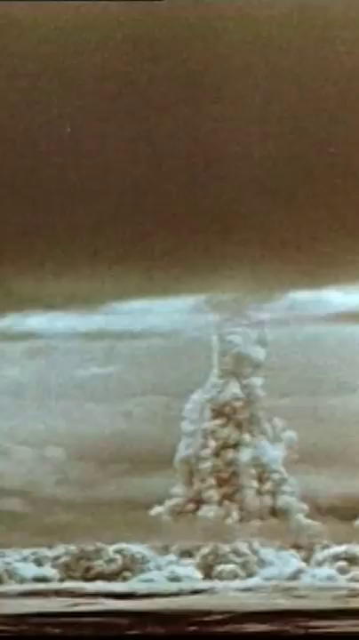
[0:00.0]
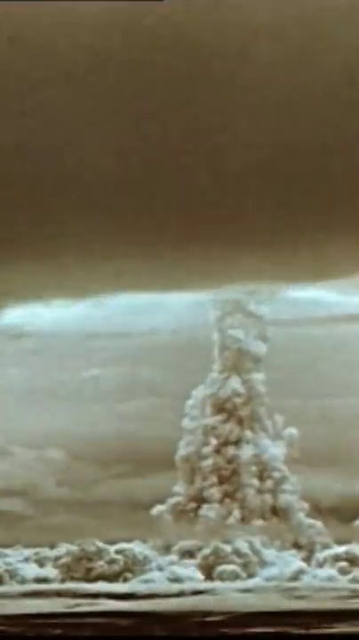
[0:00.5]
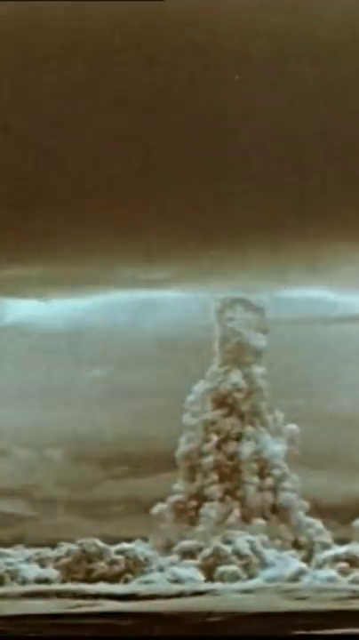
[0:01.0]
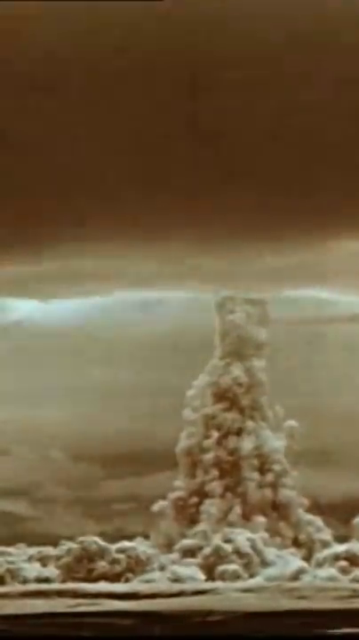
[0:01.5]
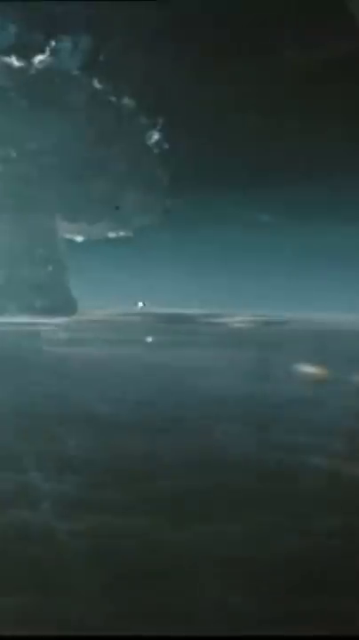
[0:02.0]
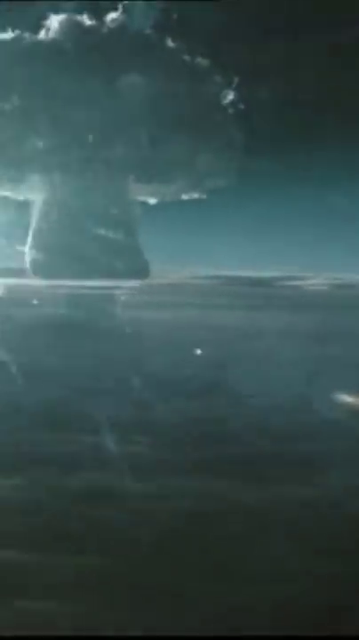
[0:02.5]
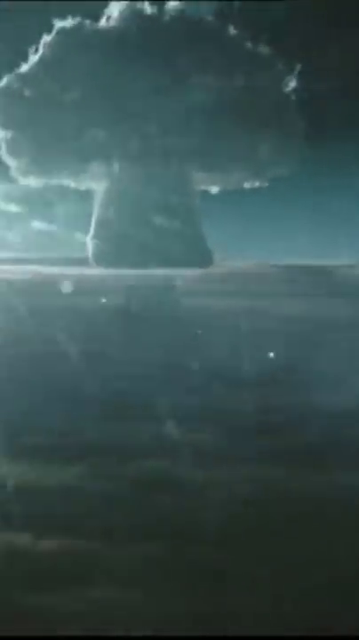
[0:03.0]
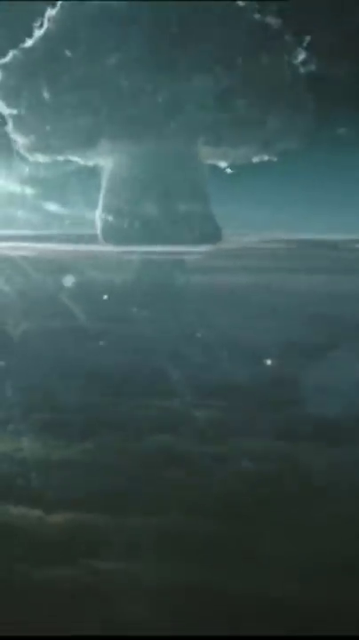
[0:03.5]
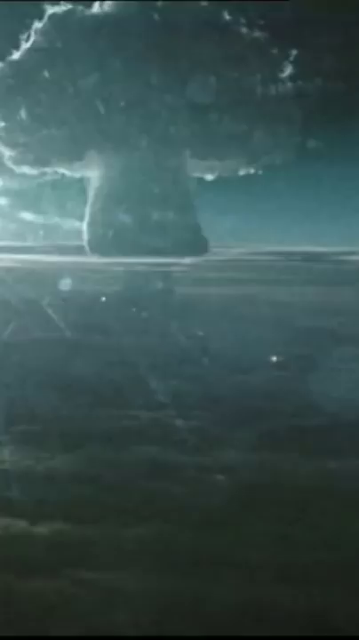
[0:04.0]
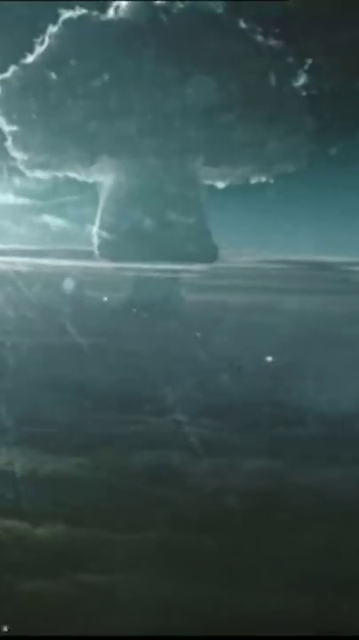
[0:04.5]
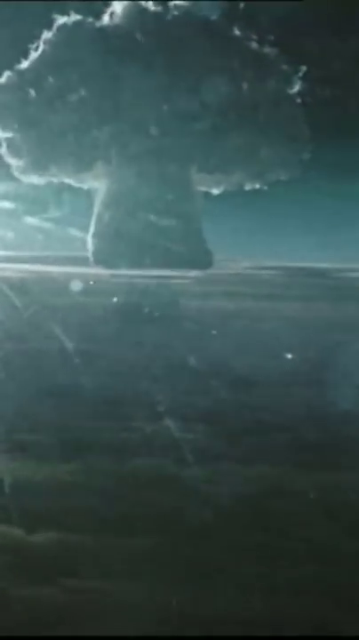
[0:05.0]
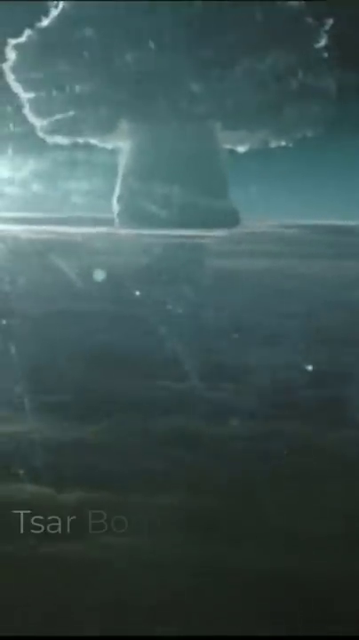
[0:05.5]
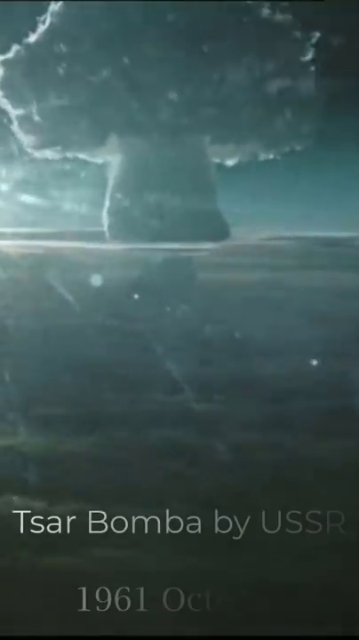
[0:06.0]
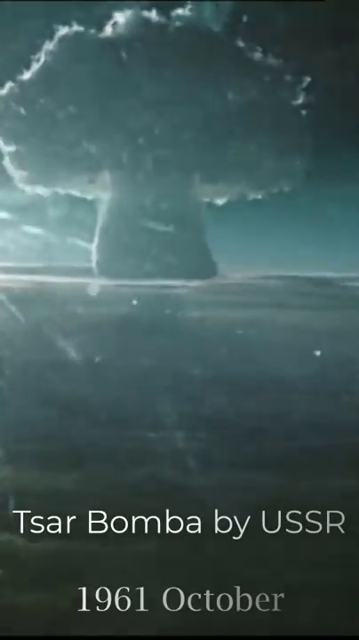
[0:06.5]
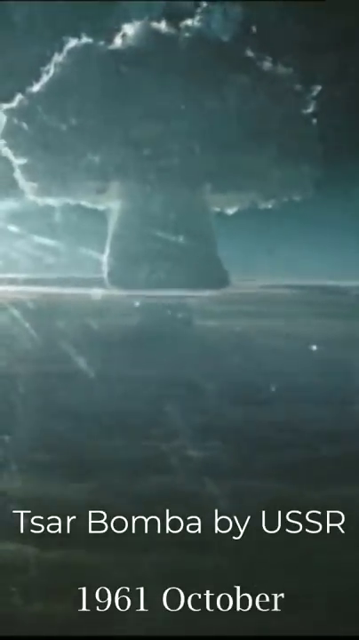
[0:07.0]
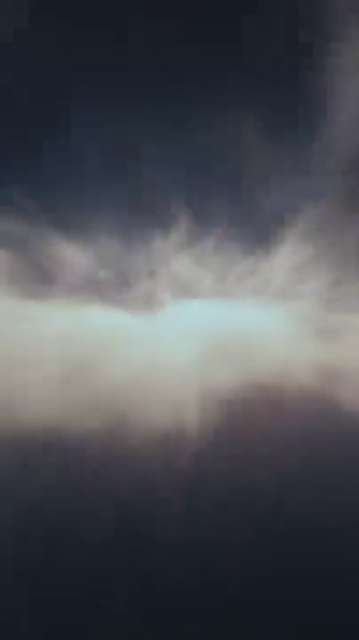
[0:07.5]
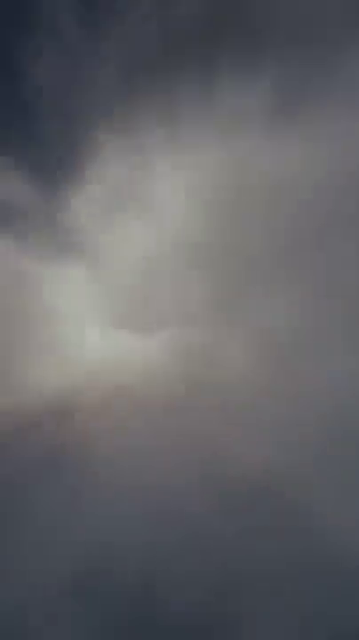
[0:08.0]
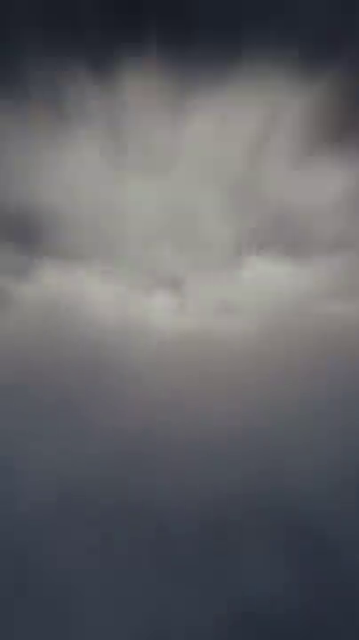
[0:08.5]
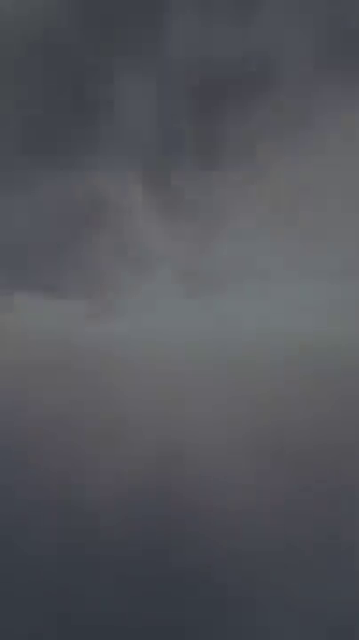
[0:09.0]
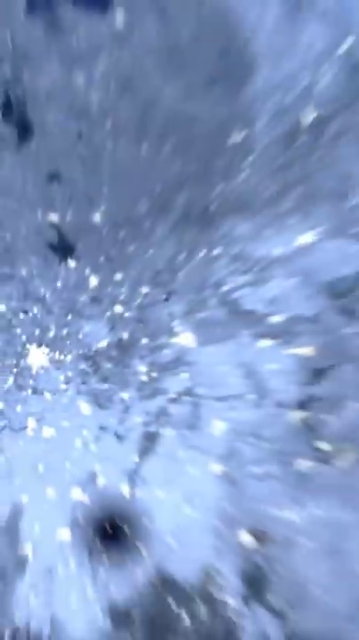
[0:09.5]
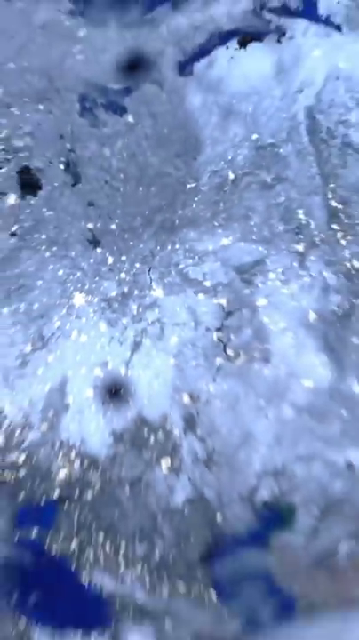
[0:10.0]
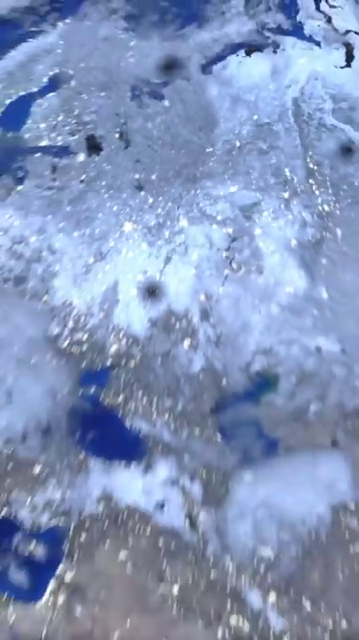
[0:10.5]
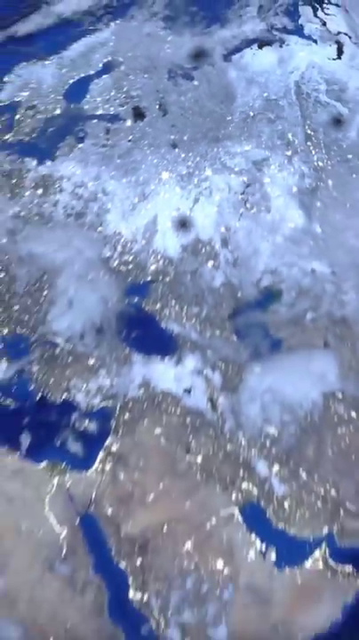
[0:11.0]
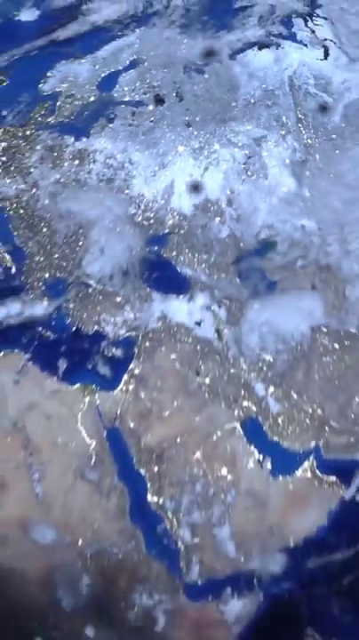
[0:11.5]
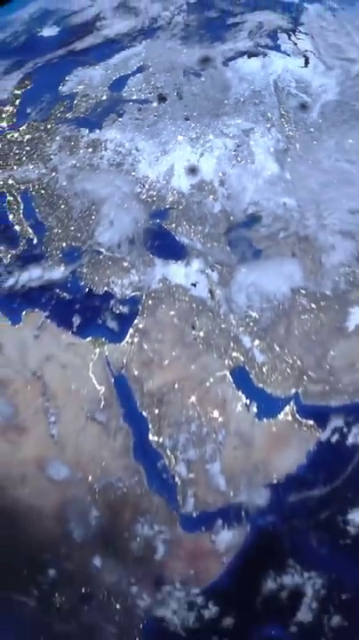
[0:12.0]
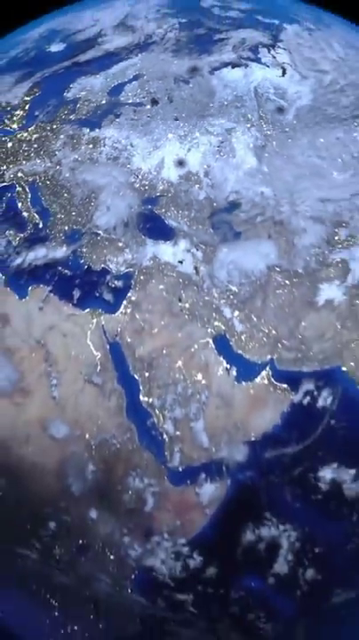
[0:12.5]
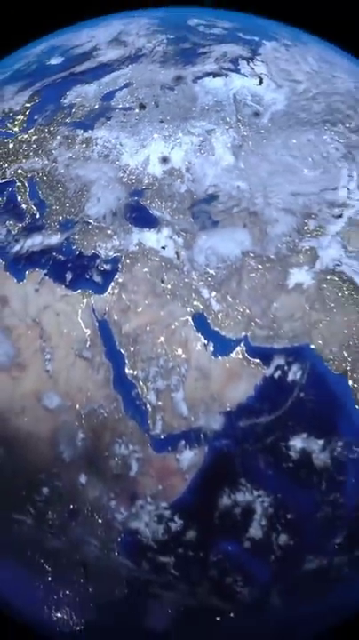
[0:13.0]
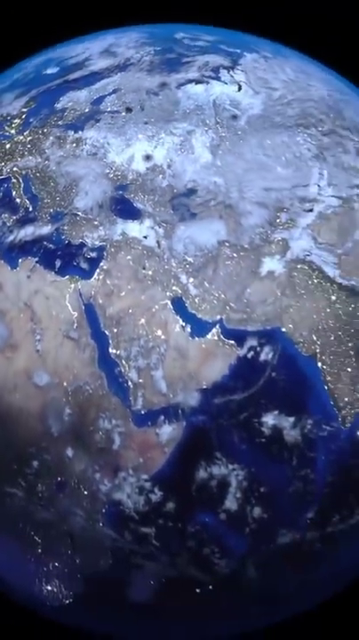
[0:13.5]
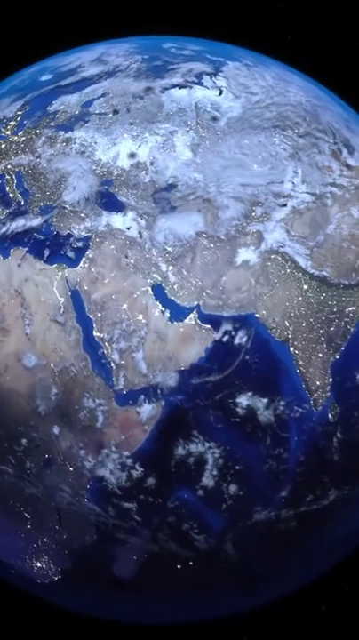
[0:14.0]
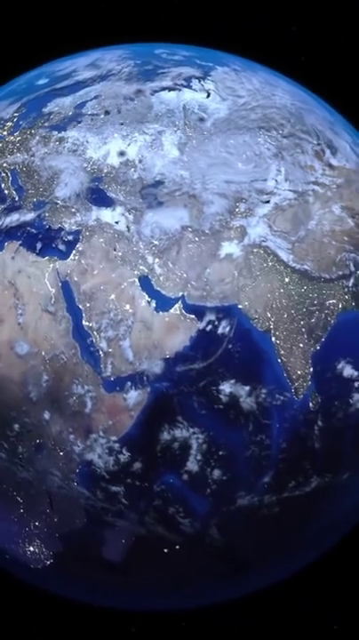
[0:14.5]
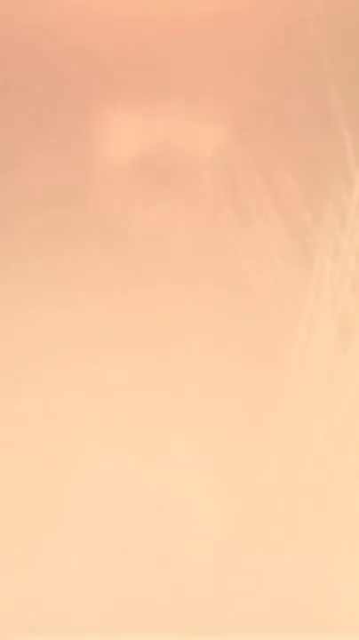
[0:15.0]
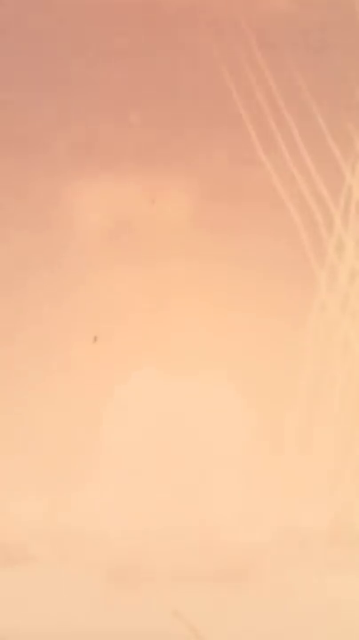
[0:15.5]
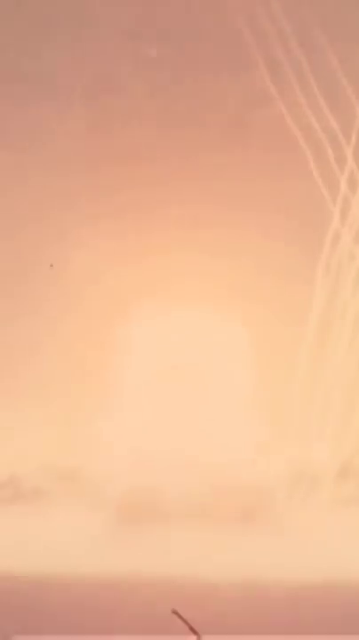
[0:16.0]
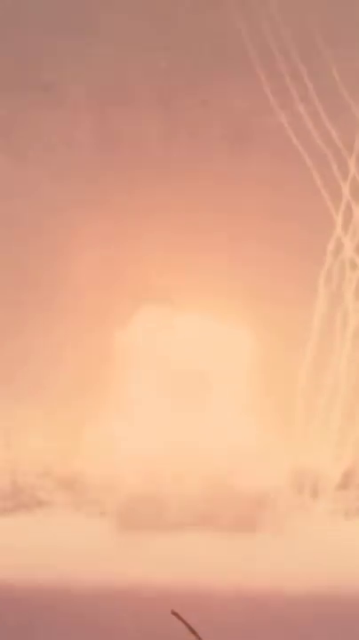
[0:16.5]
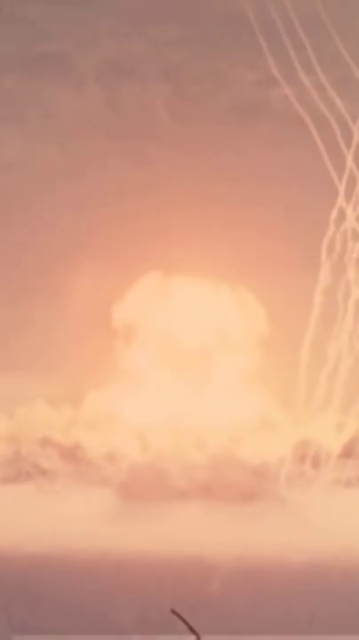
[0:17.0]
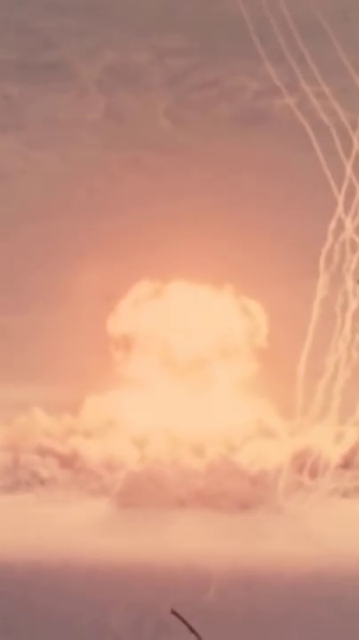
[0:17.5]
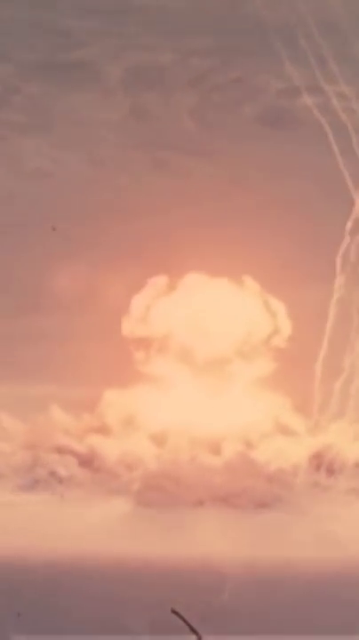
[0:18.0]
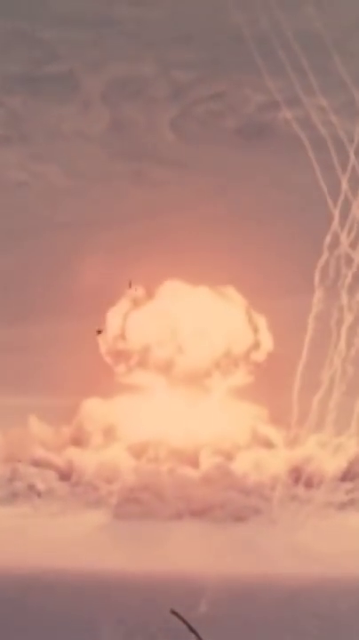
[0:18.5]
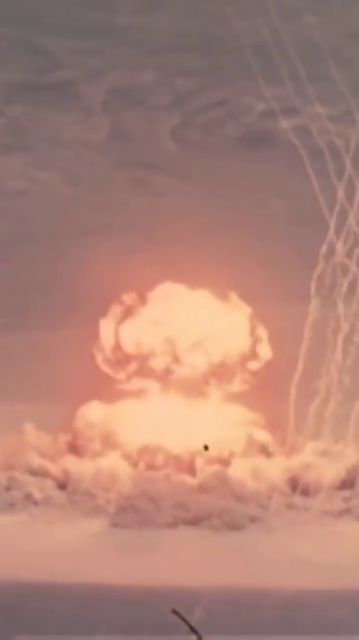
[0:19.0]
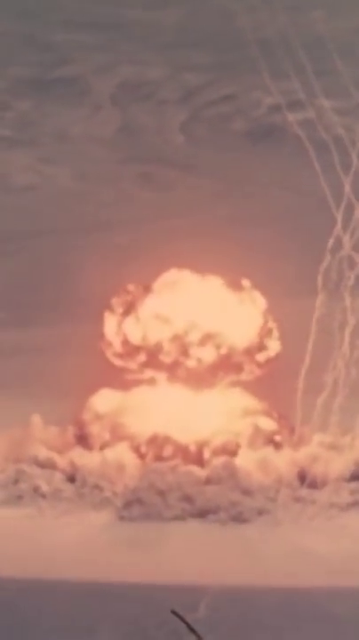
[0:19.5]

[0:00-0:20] A nuclear blast is seen from a distance, first stirring an orange cloud and then shifting to one that is more neutral or gray in tone. Mushroom clouds are clearly visible on both explosions; the first is thin and the second is thick. The view then moves through a sea of clouds and zooms out beyond the world, showing that these clouds can be seen. It then shifts back to the atomic explosions, filtering through the orange one once more, with clouds visible behind the explosions.